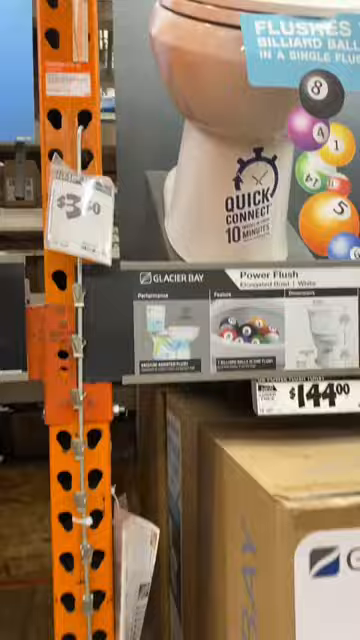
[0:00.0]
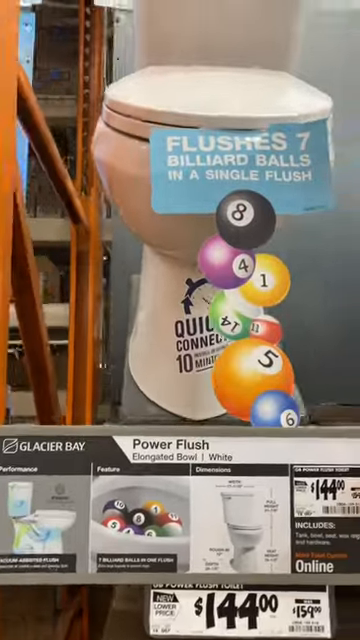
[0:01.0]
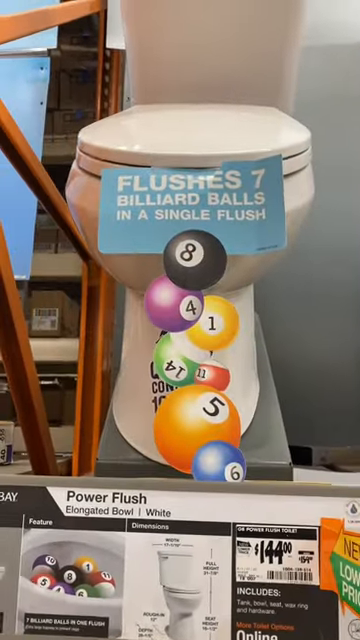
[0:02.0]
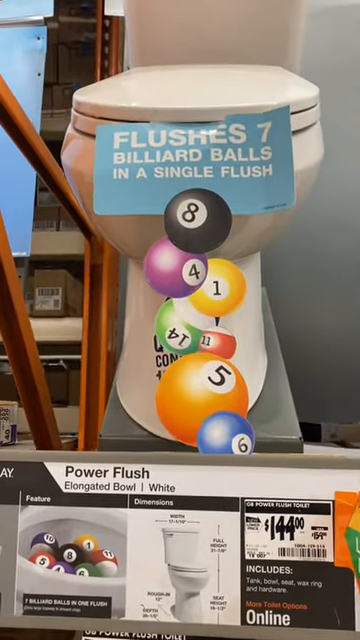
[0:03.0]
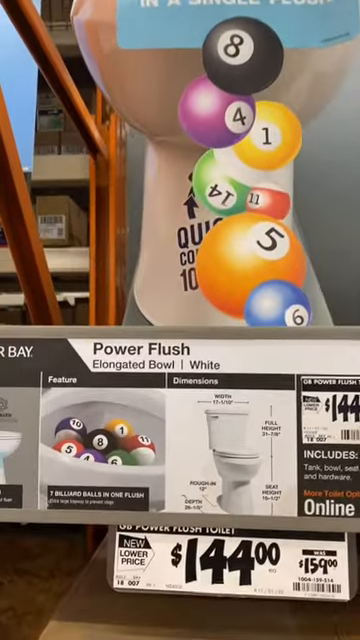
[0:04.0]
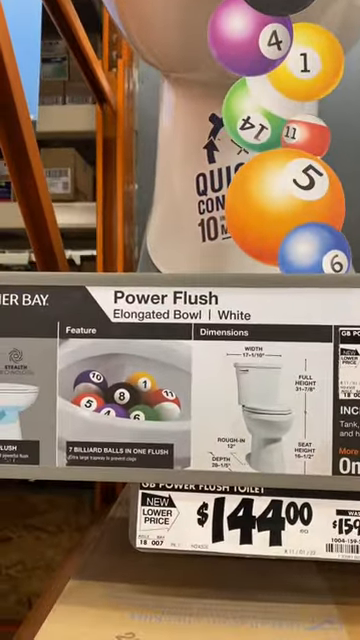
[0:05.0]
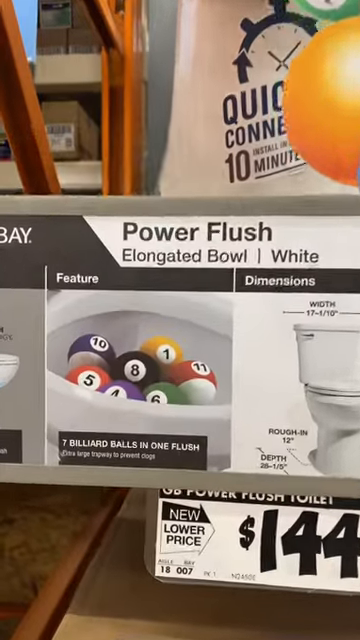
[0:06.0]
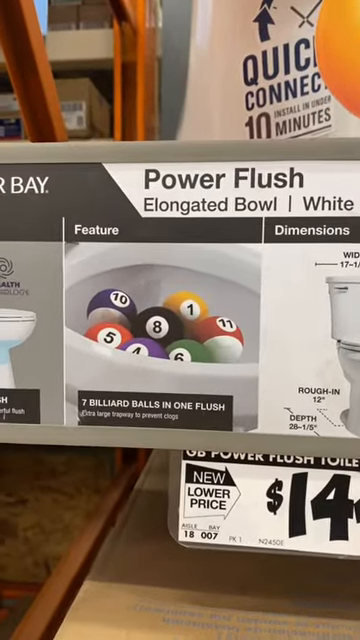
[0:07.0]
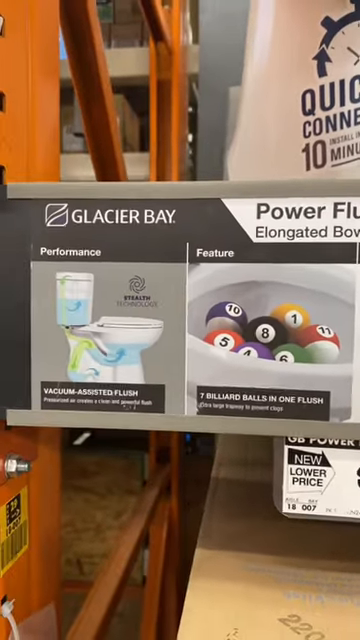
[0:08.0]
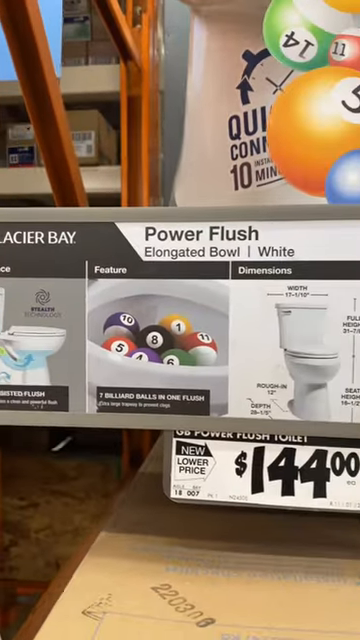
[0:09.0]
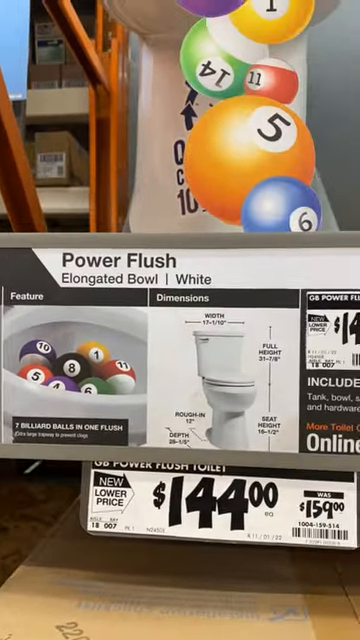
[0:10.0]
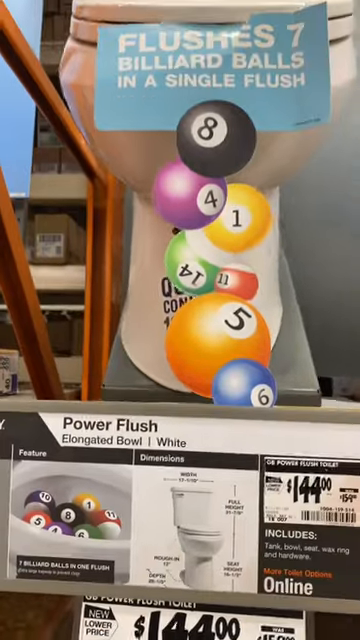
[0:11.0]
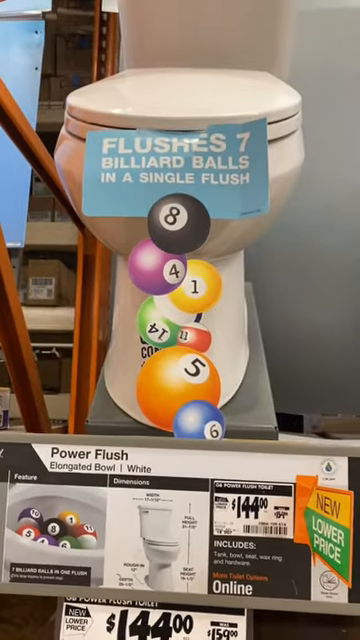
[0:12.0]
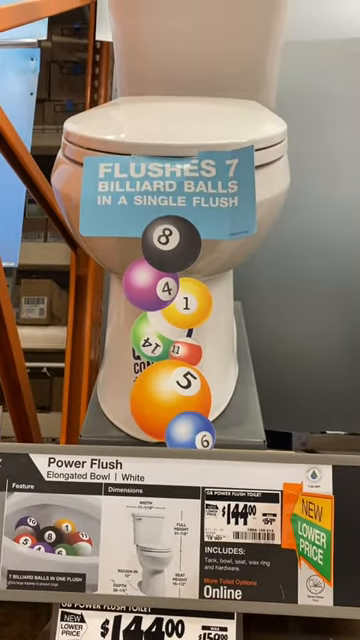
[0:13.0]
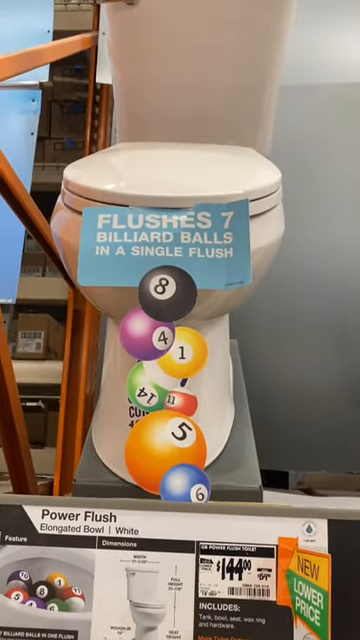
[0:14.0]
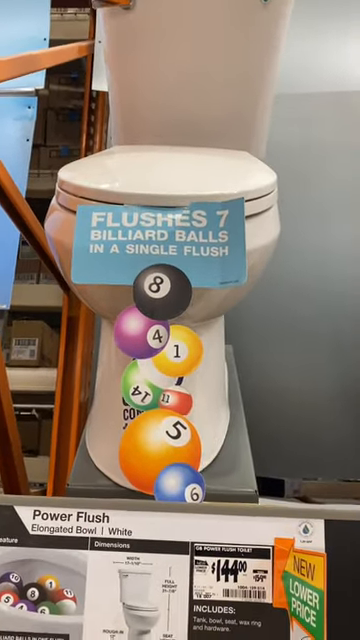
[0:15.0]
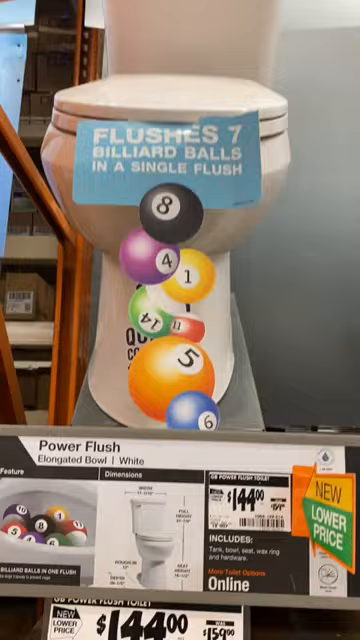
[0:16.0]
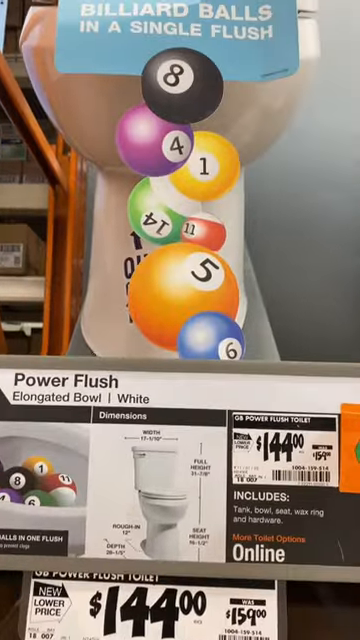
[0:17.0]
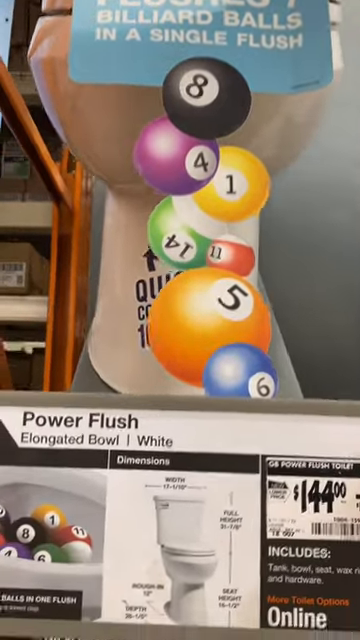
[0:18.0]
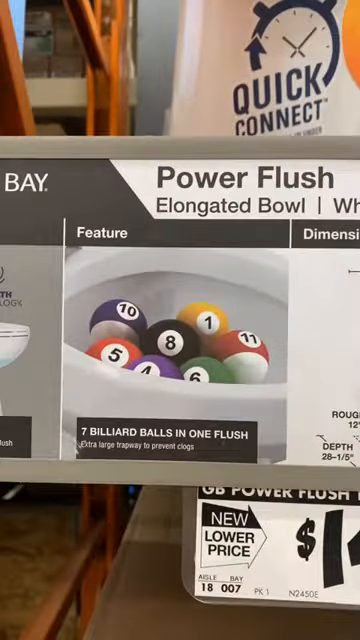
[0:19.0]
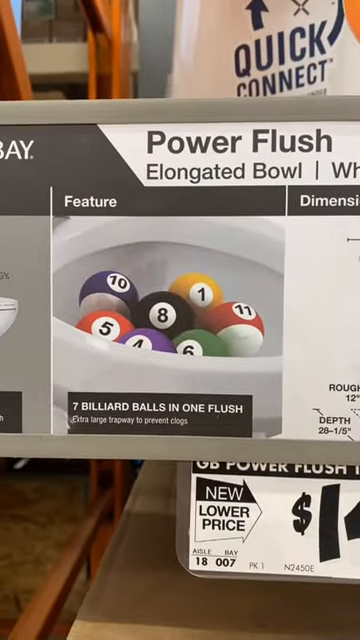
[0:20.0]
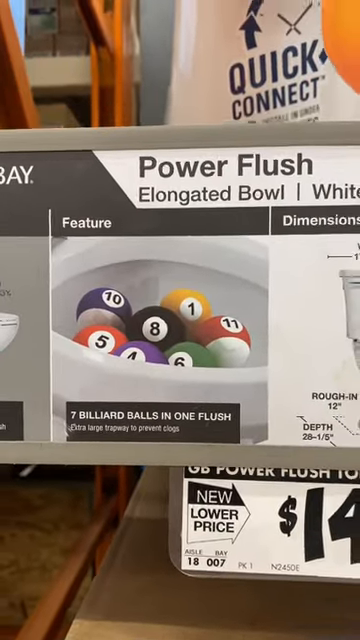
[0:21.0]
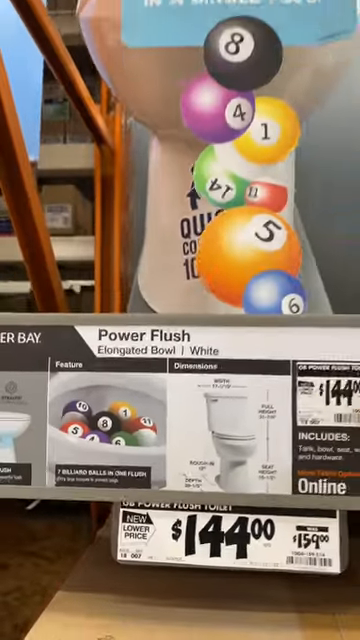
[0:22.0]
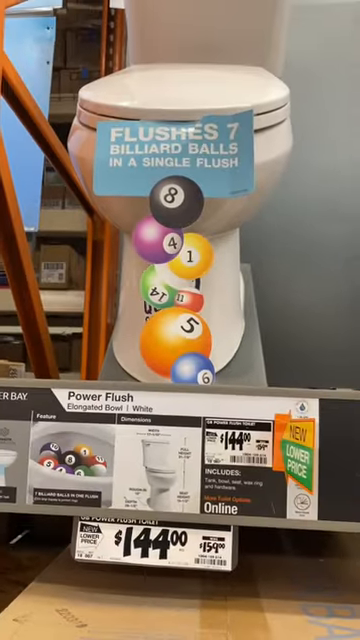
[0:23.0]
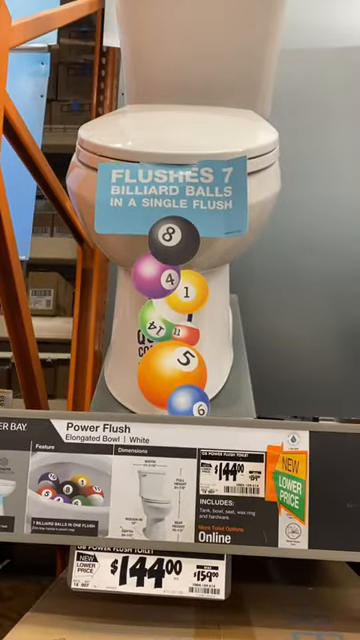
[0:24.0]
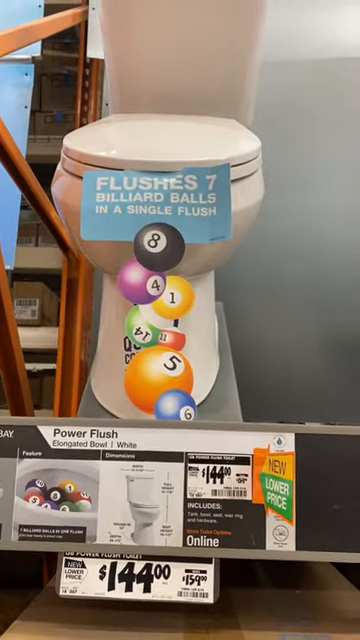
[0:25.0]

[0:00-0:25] The video is titled Check Out Power Flush Toilet Flushes. In the upper right corner is a profile avatar of a white male with a receding hairline and a mustache against a blue background. In the bottom right is a cartoon-style avatar logo of a white face with a black goatee, wearing a blue and white trucker hat with the bill slightly tilted to the side. The footage appears to be from a handheld camera, apparently a cell phone, zooming in and out on a product display in a Home Depot store for a Glacier Bay Power Flush Toilet. It zooms in on the toilet, then on the ads and shelf information cards, then on the price, and keeps zooming in and pulling back. The toilet is set up at an angle so that its full frontal view can be seen without having to stand over the top of it. It has pictures of billiard balls of different colours at the toilet seat. A label on it reads "flushes seven billiard balls in a single flush," and this kind of messaging is repeated on the store display. The lighting is dim and poor, the resolution is poor, the camera work is poor, and the colours are not very well displayed. The person taking the video is not visible.